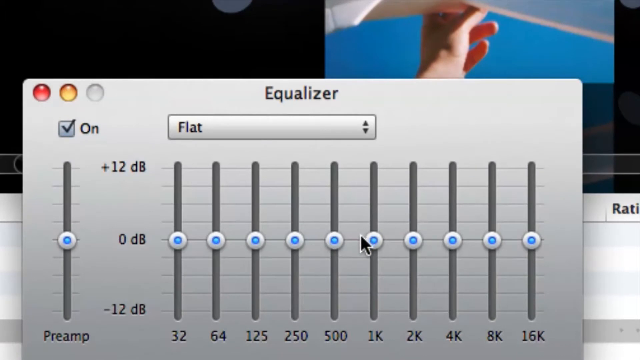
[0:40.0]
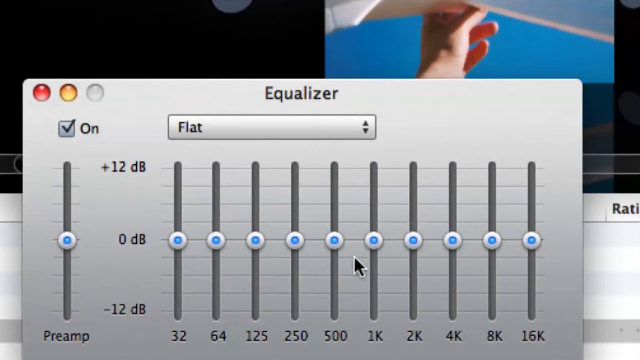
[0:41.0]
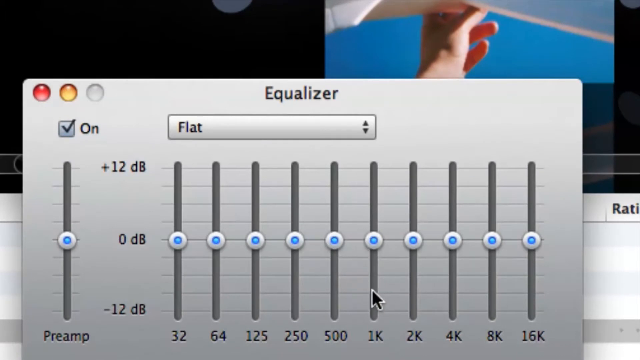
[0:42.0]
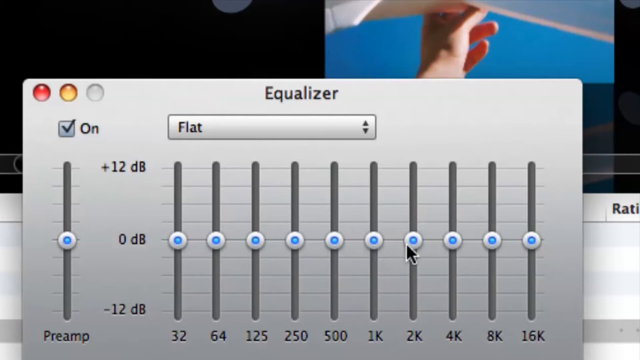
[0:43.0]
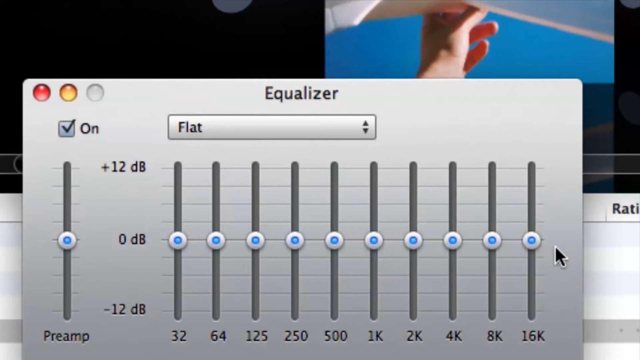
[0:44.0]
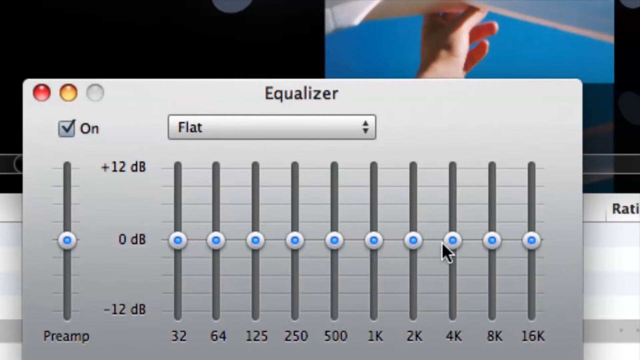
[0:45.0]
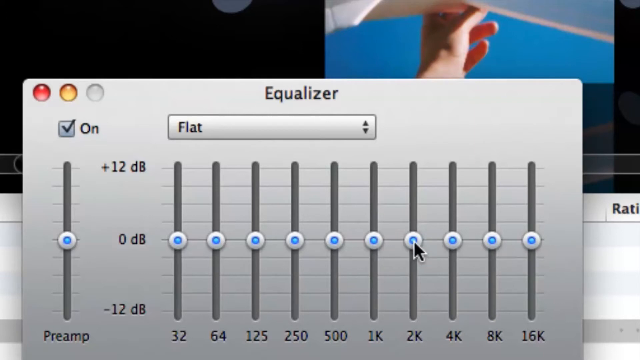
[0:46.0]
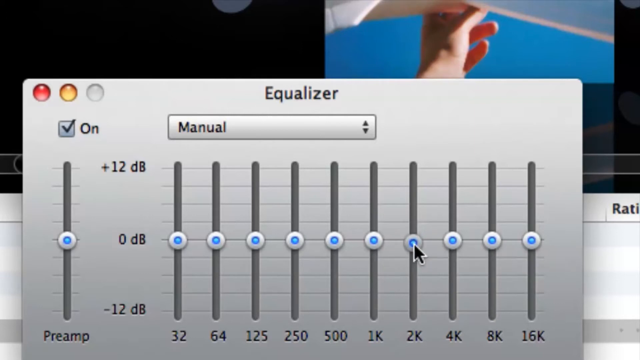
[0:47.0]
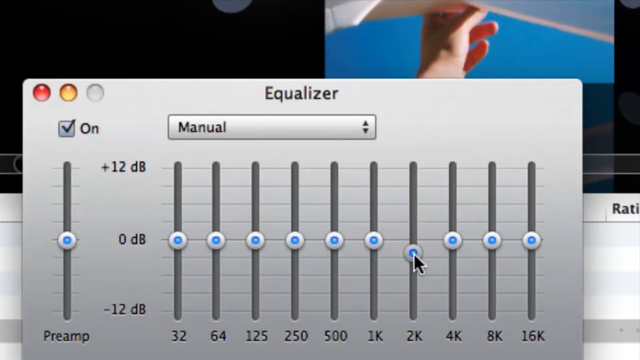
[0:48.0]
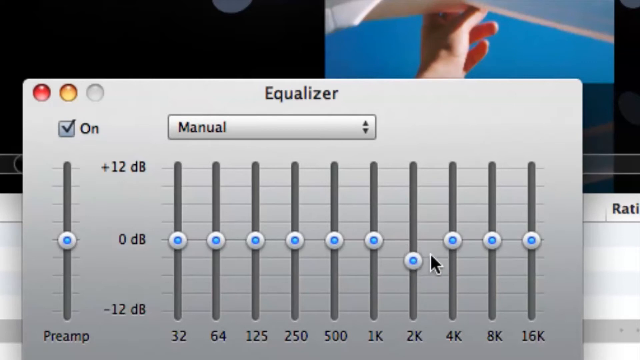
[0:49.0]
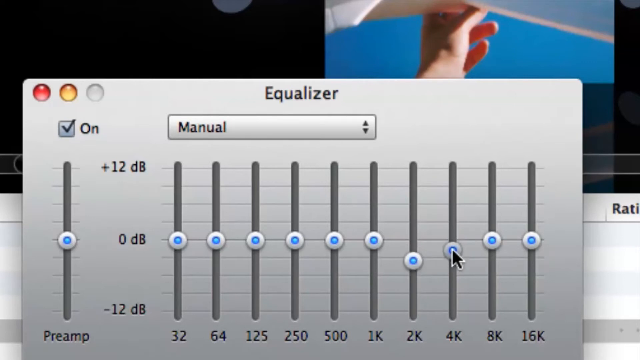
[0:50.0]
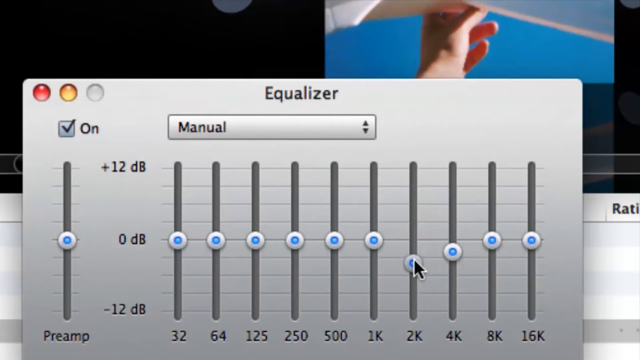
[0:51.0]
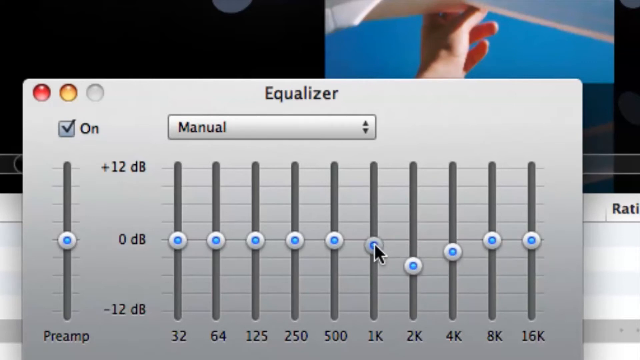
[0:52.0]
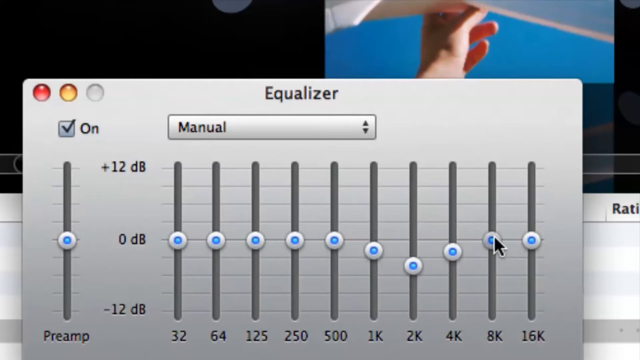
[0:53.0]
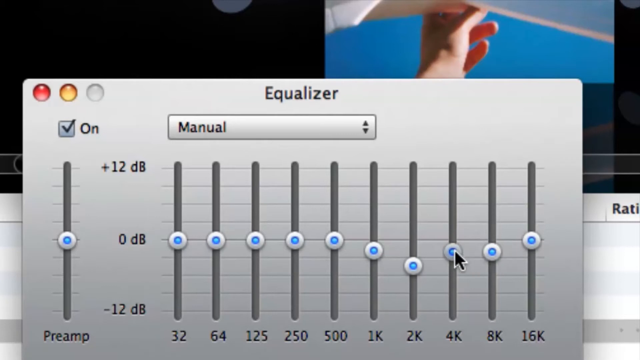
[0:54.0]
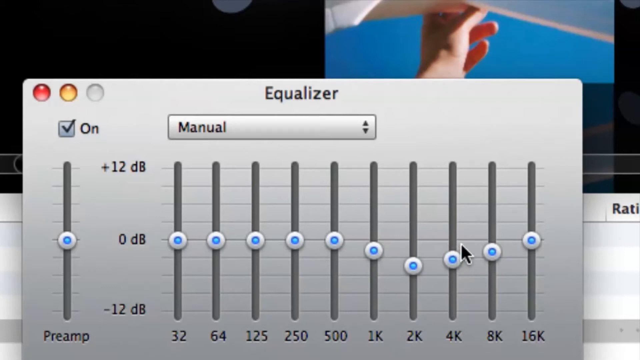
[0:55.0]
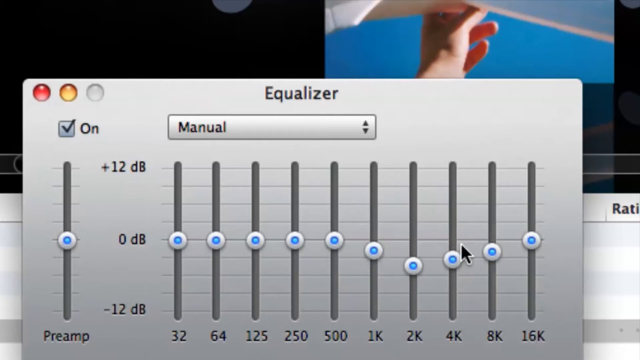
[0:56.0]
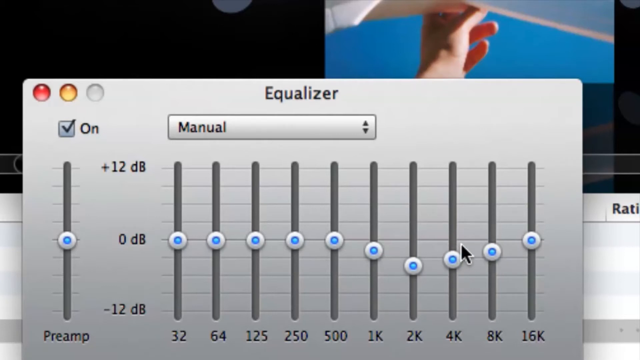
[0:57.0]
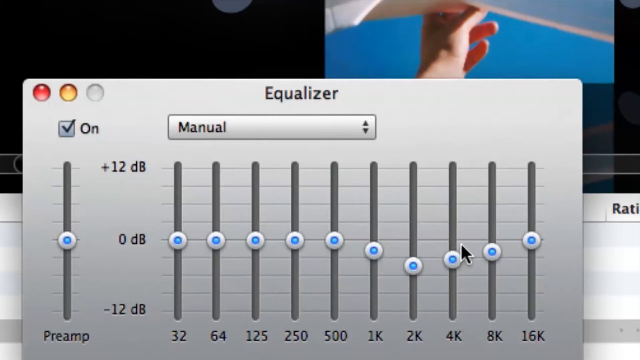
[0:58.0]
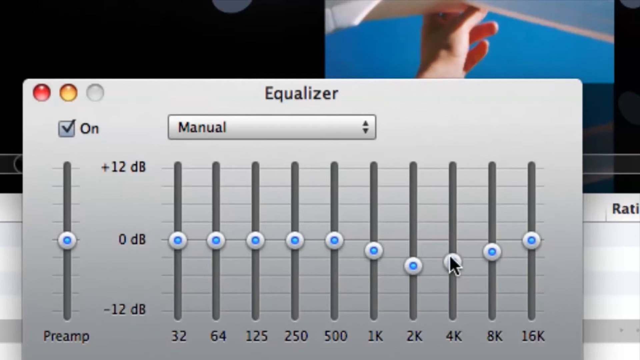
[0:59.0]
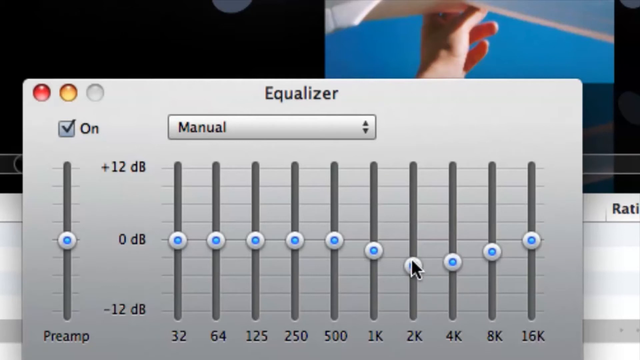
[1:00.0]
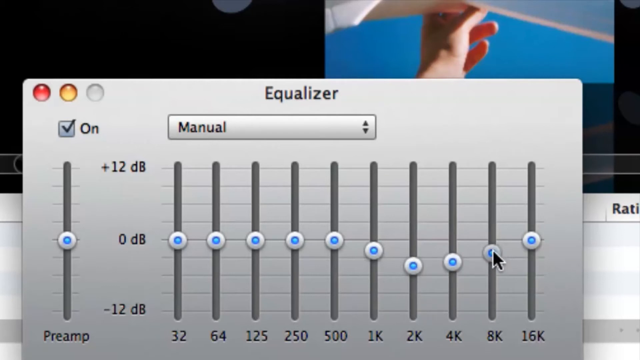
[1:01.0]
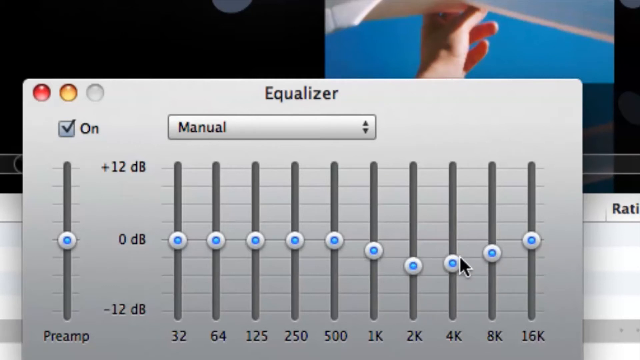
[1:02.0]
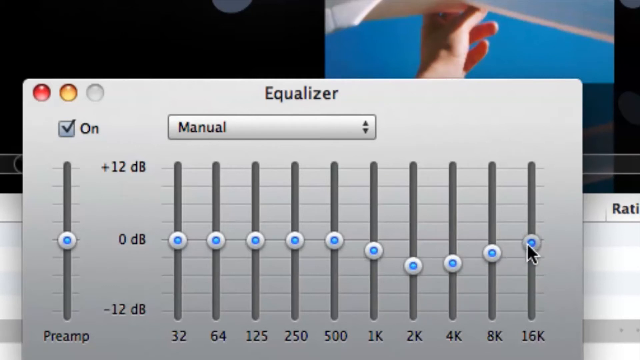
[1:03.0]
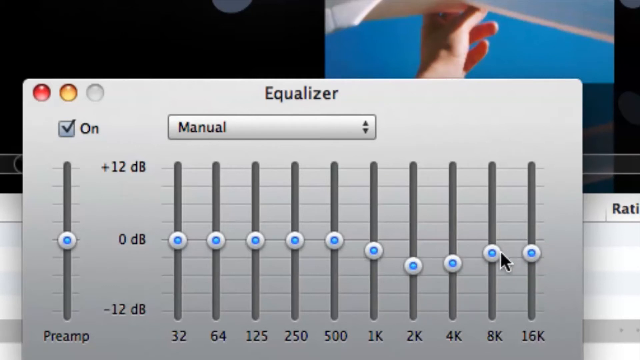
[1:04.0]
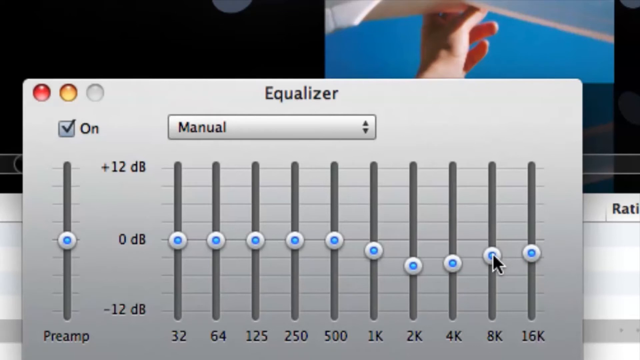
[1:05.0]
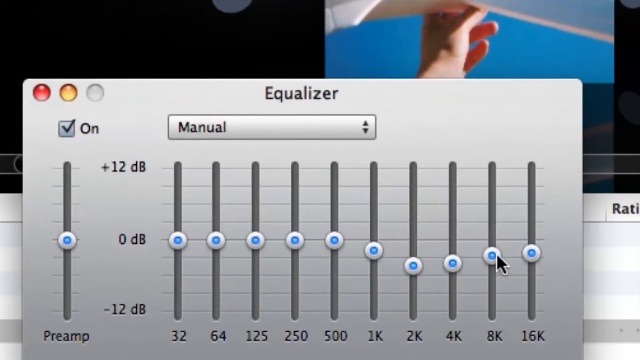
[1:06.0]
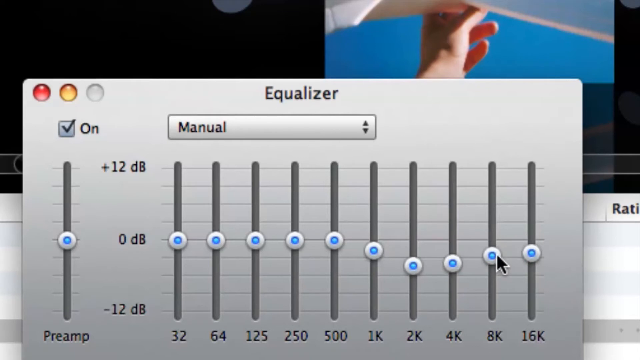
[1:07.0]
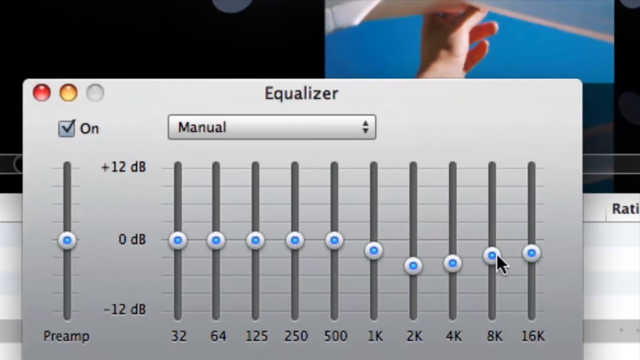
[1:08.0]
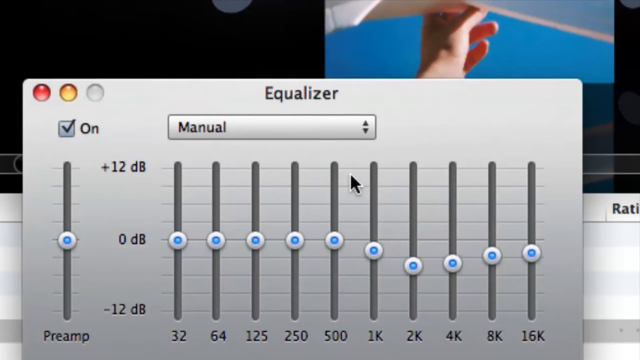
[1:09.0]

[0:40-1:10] With the equalizer window open, the cursor is in the middle of the screen. It moves to the bottom and across to the left and pulls down some of the bars from 1K through to 16K. The cursor makes small adjustments at first, and the changes do not appear to be large or to run through very quickly. The drop-down menu, which previously said "flat", now says "manual". This was not selected from the menu; the change happened when the cursor started moving the little blue dot in the middle of the bars, so it seems to react to the changes being made.